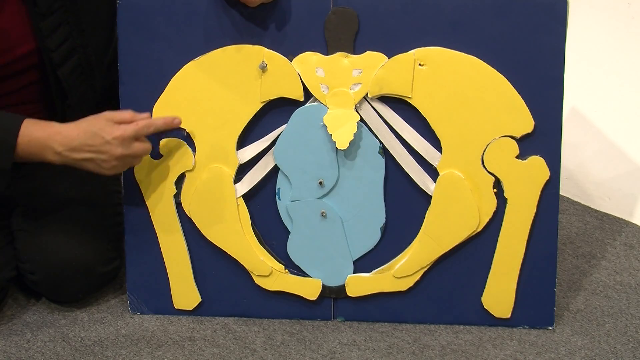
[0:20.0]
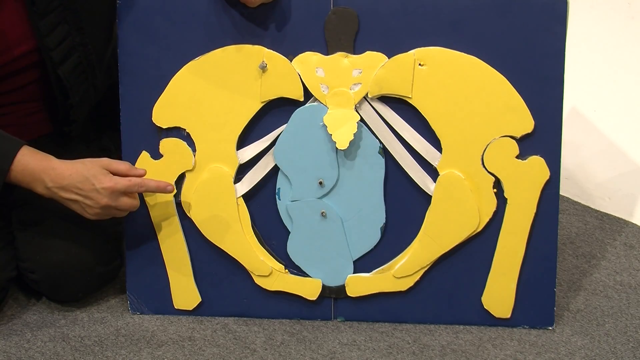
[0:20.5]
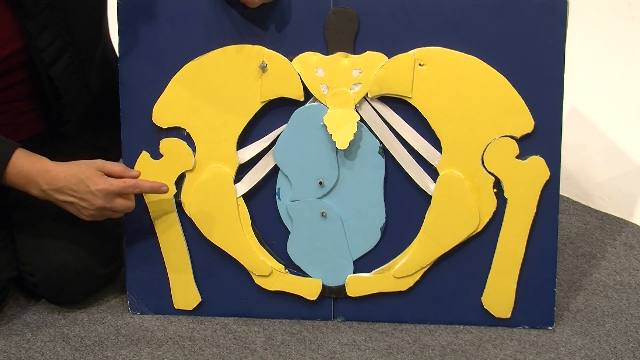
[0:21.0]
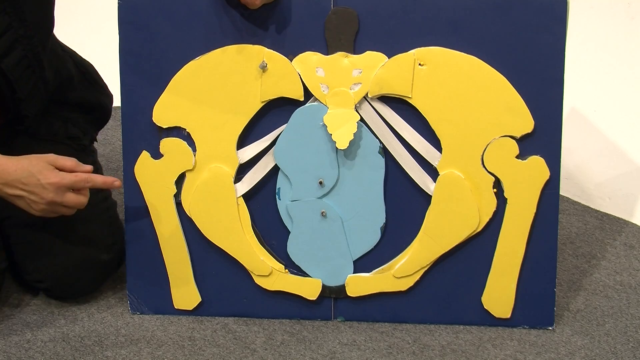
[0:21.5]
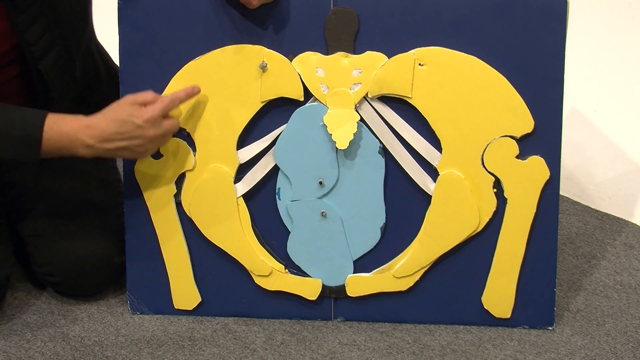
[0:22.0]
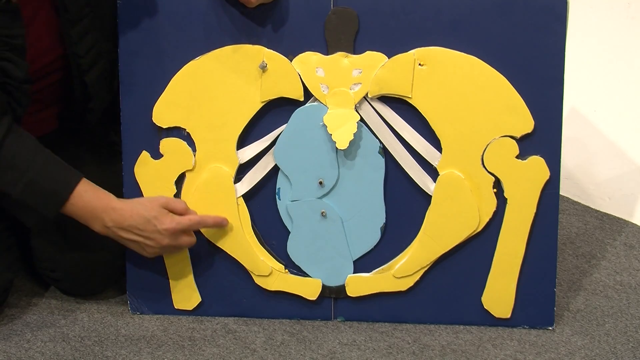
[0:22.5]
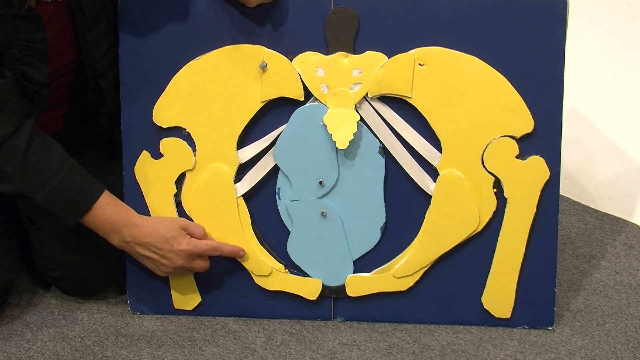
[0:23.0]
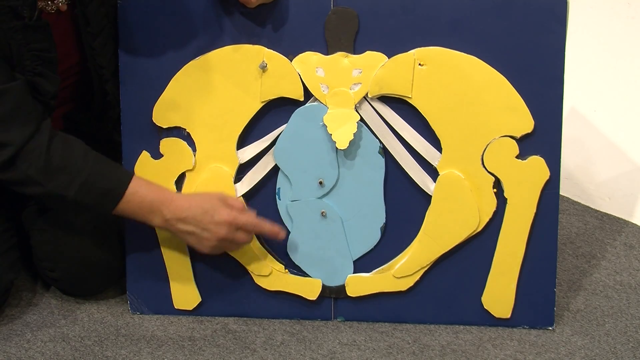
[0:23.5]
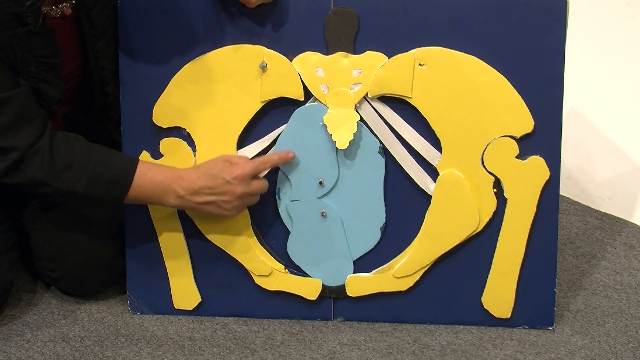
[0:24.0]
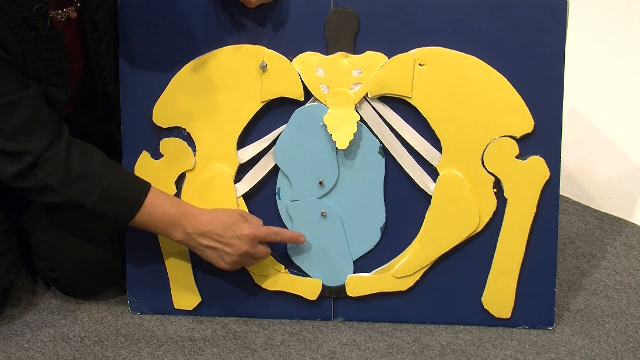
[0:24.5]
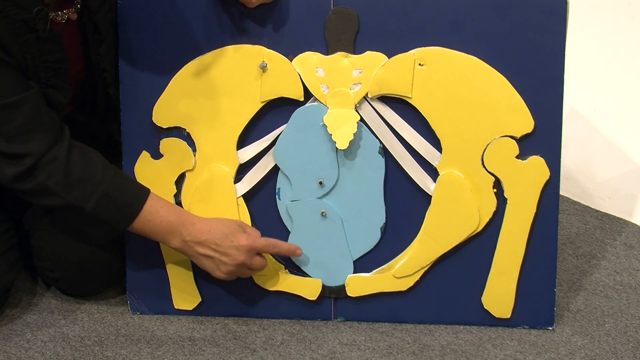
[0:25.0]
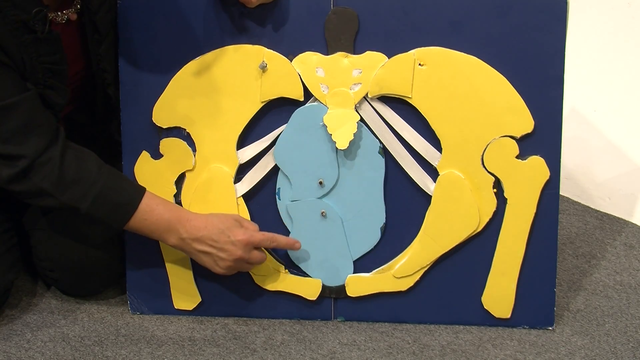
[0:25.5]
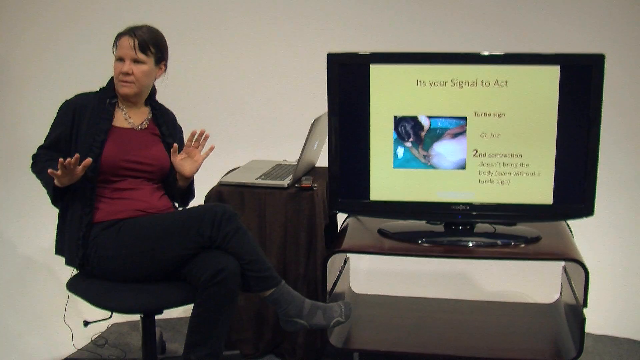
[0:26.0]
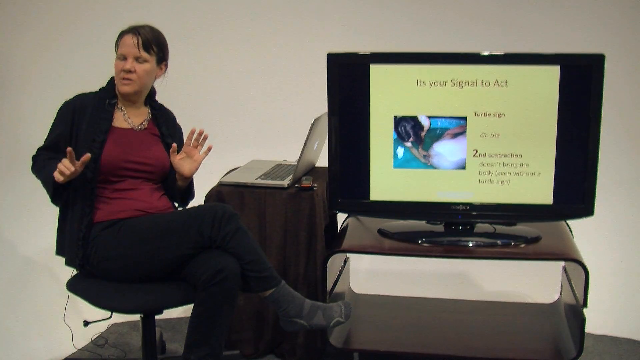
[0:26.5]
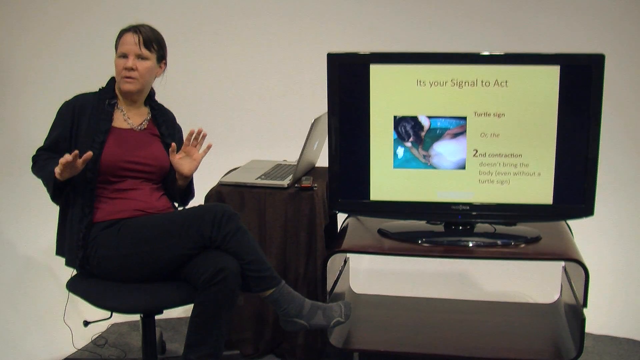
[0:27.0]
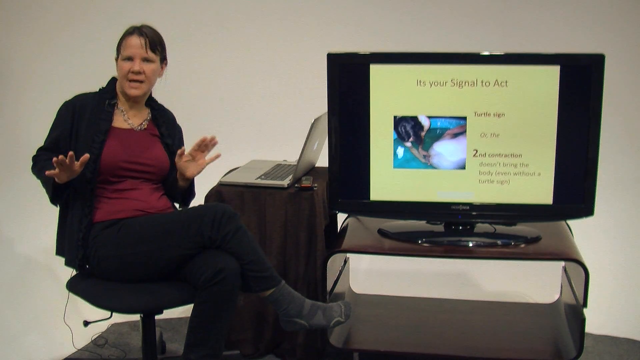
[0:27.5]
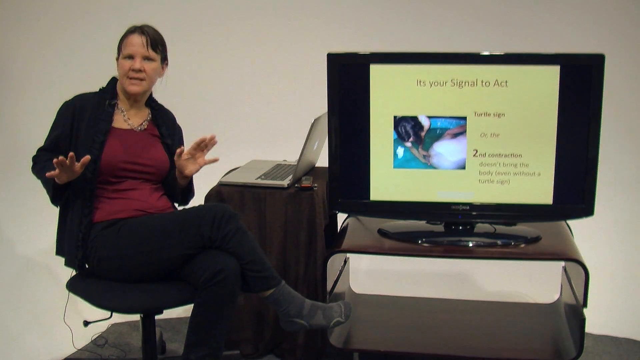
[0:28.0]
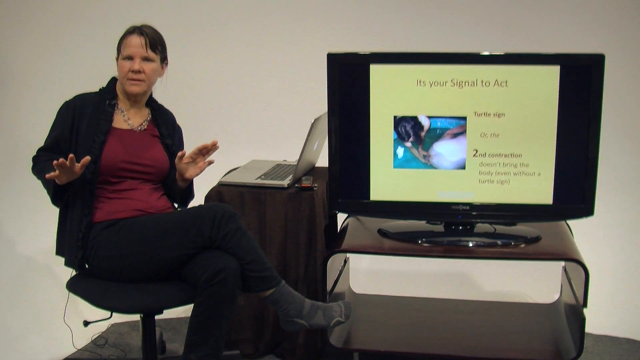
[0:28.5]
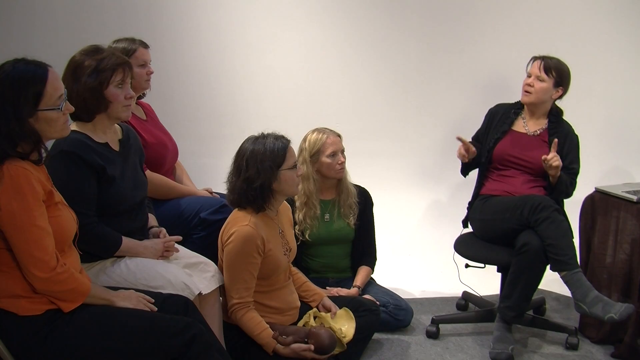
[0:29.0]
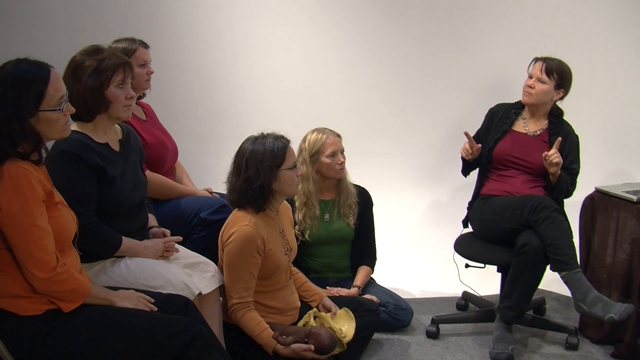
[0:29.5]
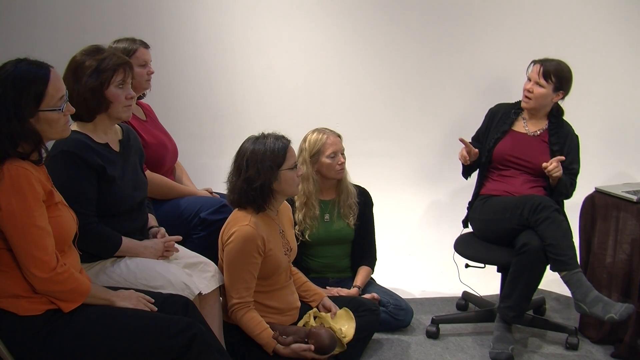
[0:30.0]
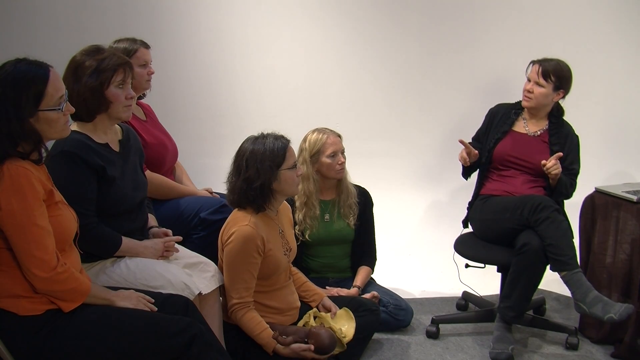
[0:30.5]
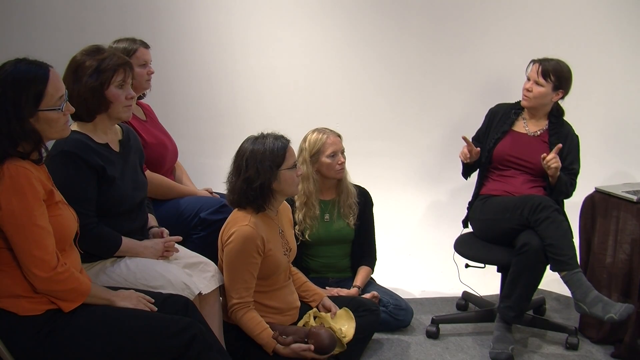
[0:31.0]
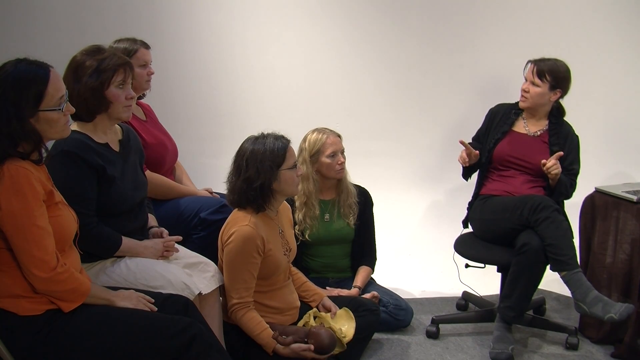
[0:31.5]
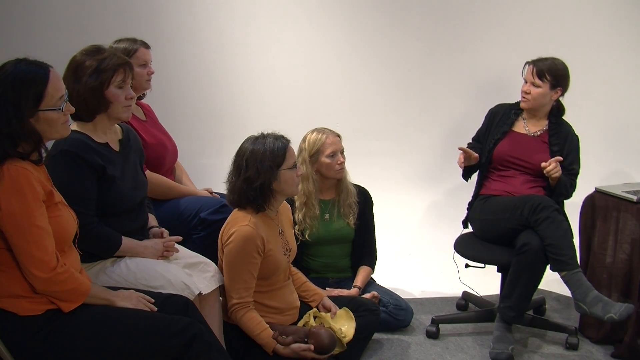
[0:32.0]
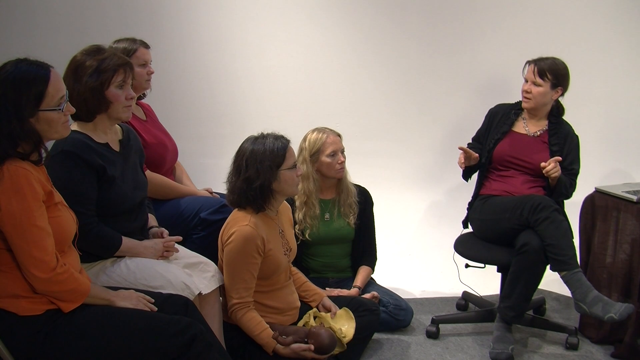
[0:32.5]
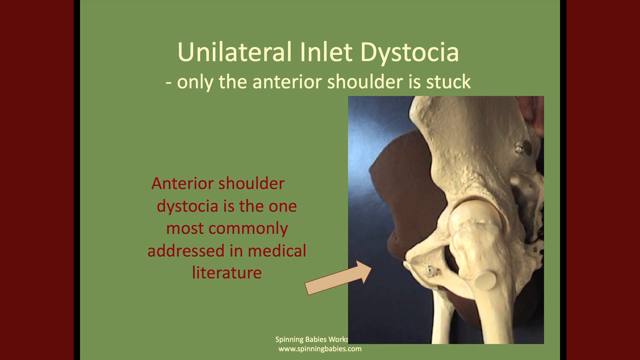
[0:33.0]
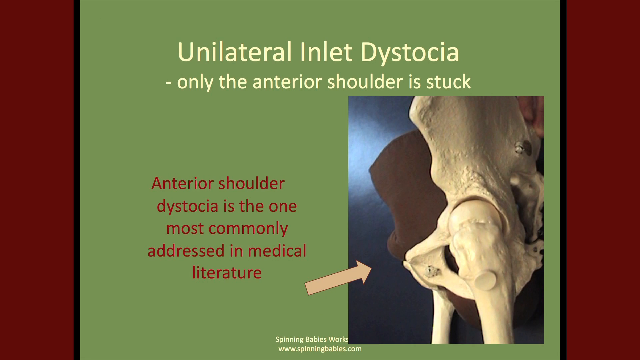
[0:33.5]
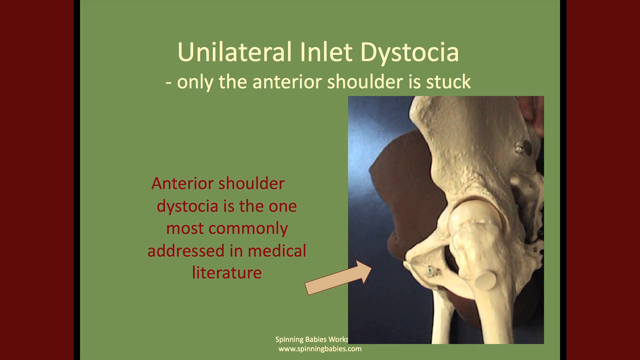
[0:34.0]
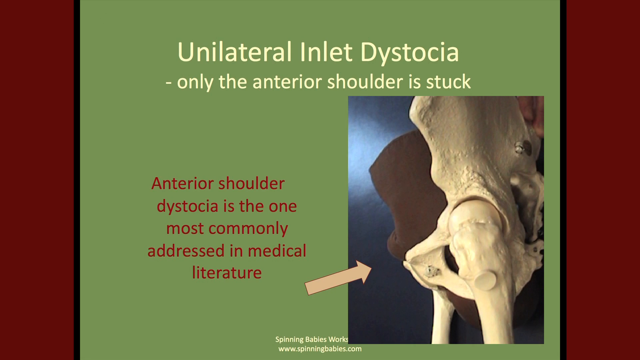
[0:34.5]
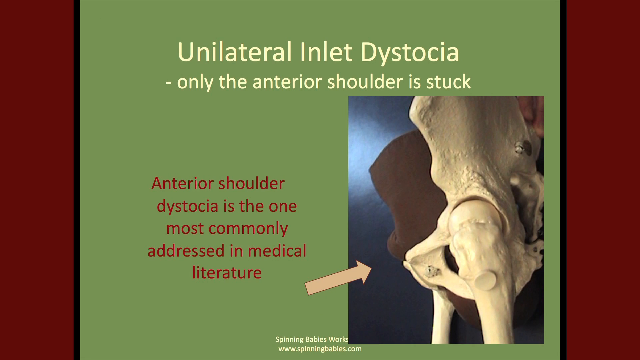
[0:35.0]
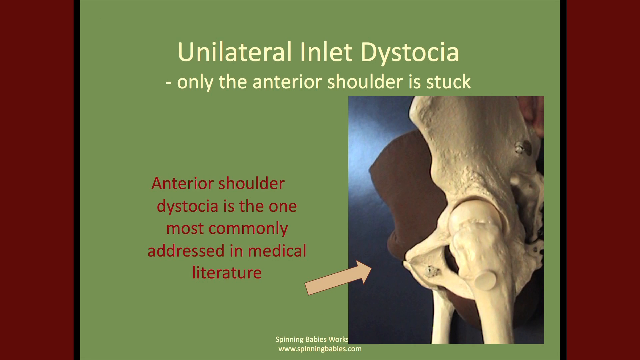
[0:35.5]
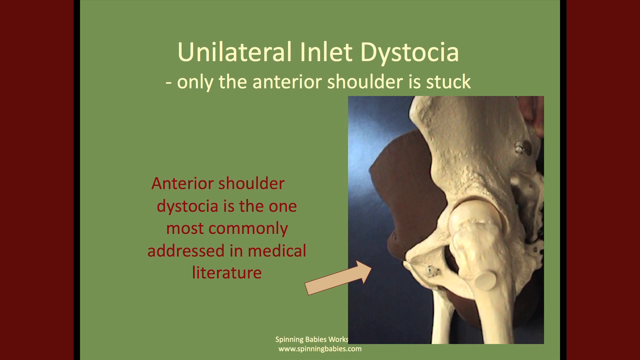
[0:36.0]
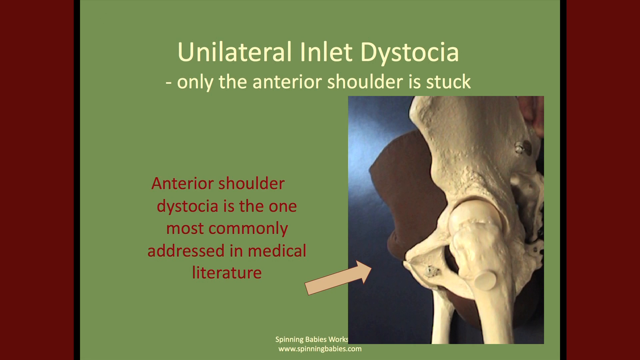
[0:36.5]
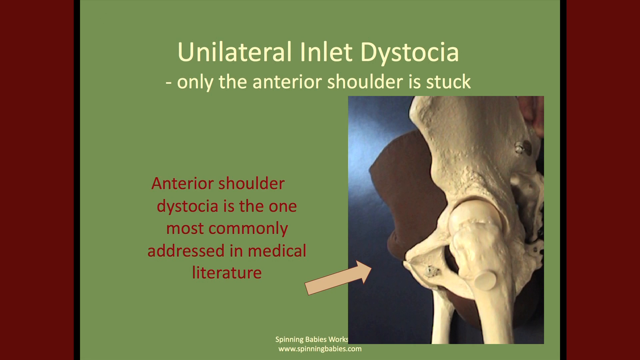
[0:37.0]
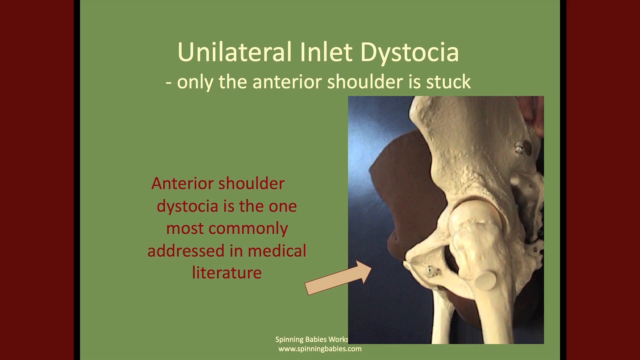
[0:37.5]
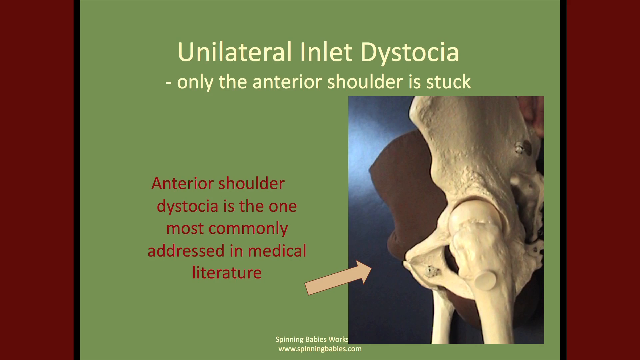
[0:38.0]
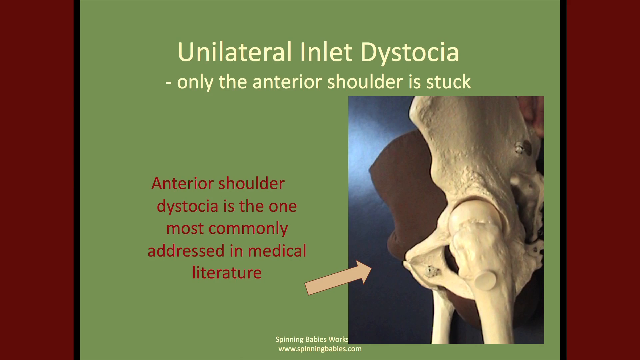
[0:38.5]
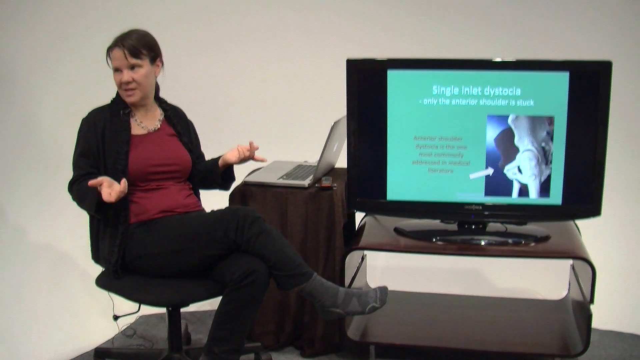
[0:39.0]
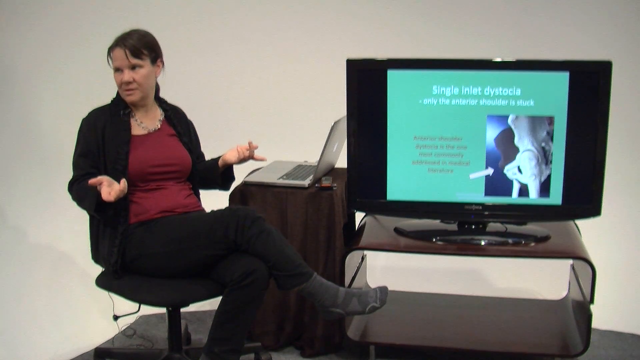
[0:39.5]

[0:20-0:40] The 2D model of the pelvis is mainly yellow, with yellow forming the visible pelvic bones and hip bones, and a 2D model of a baby inside. Gail's hand points to various parts of the model, first at the pelvic bones, then moving her finger into the centre to point at the flat blue 2D baby. The shot changes to Gail sitting back on the chair with the TV screen on the high-gloss unit on her right. Just to her right is also a small unit with a silver Apple laptop on it. She looks past the camera, addressing people in the room. The screen shows a slide from the presentation that says "it's your signal to act". The camera angle changes to show the group of women Gail has been addressing: five women are visible, all Caucasian and of varying ages, presumably midwives.